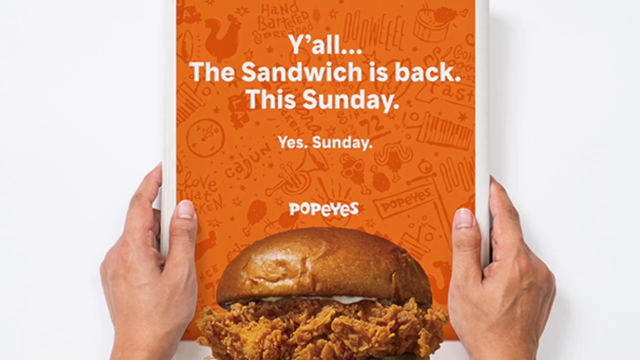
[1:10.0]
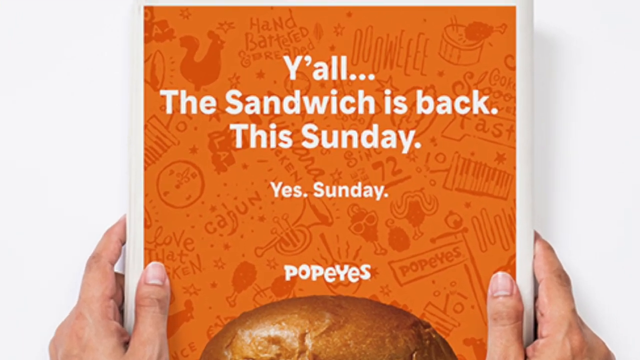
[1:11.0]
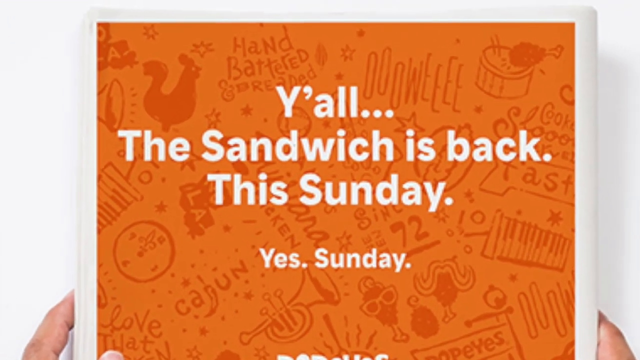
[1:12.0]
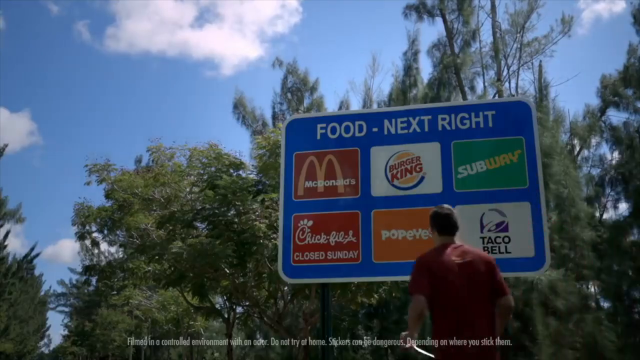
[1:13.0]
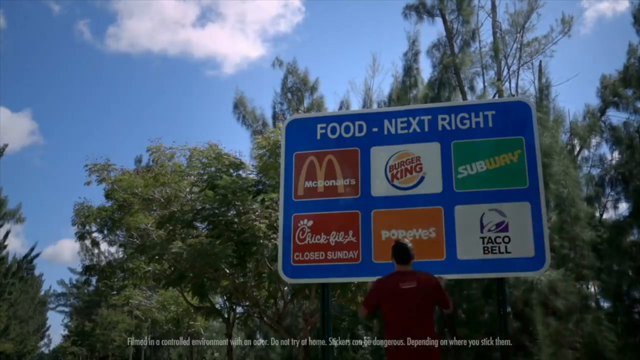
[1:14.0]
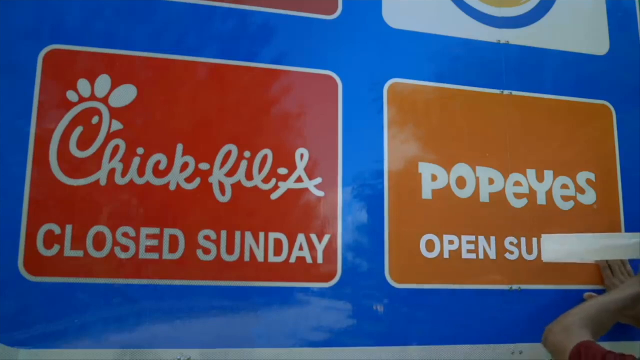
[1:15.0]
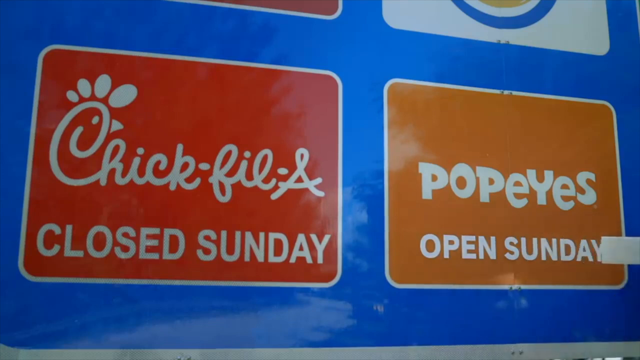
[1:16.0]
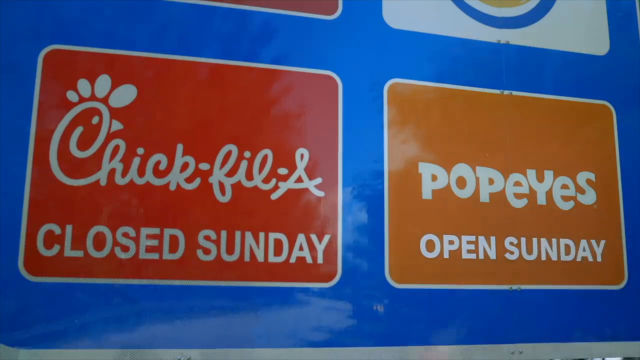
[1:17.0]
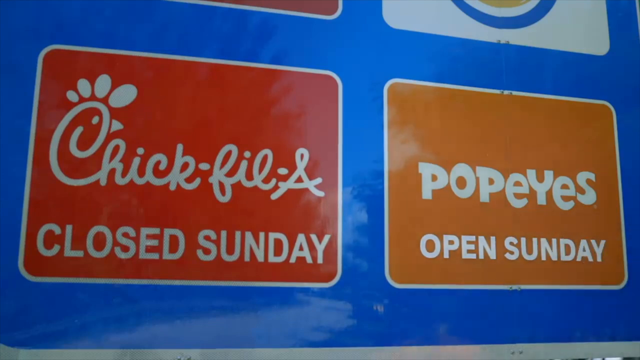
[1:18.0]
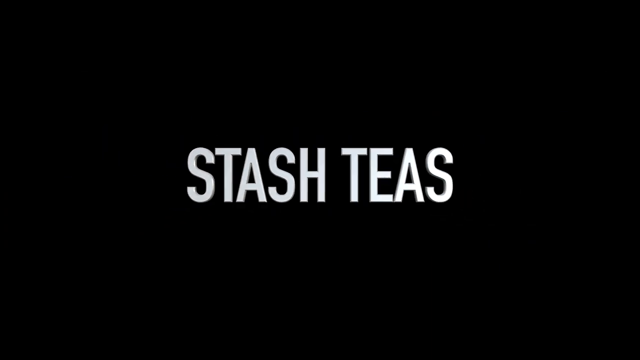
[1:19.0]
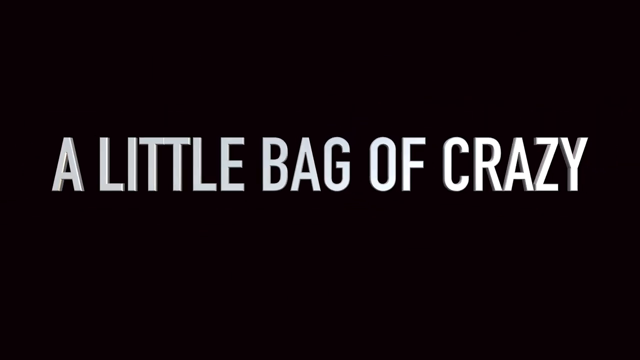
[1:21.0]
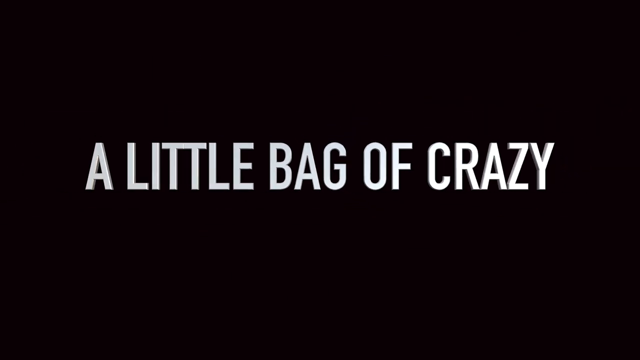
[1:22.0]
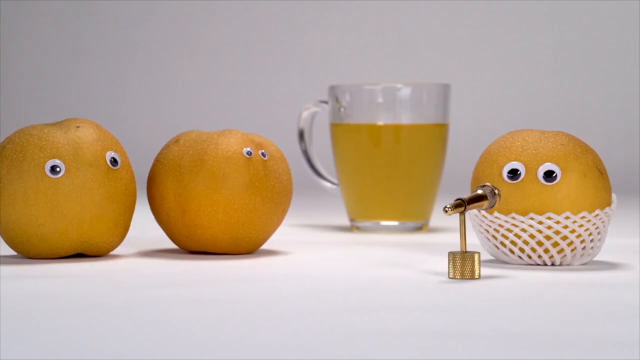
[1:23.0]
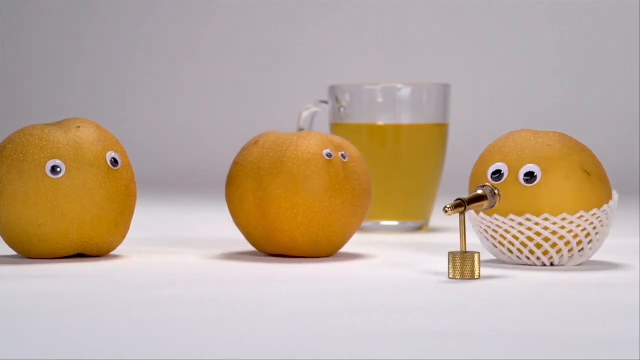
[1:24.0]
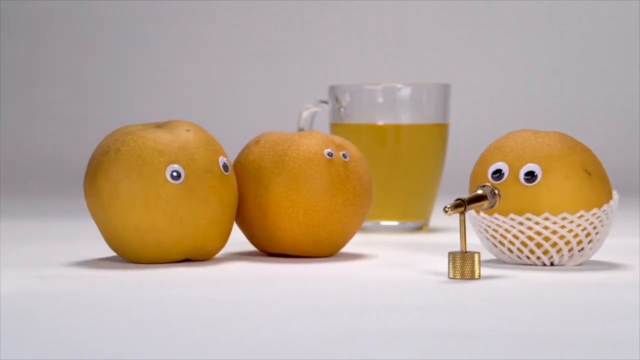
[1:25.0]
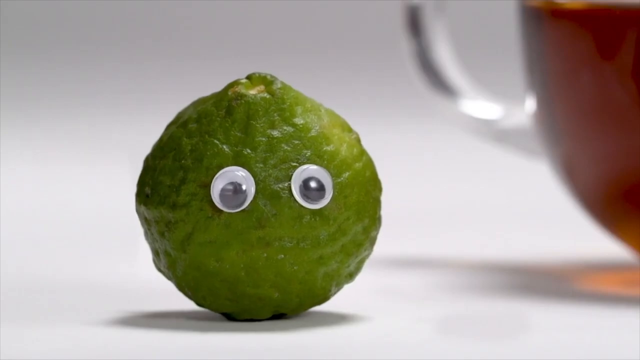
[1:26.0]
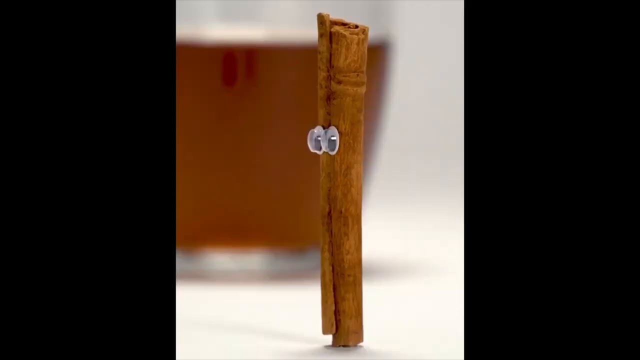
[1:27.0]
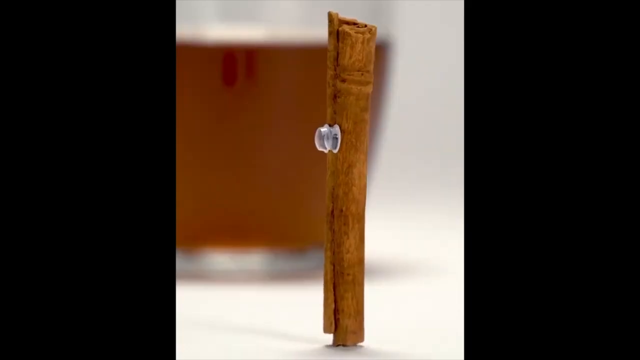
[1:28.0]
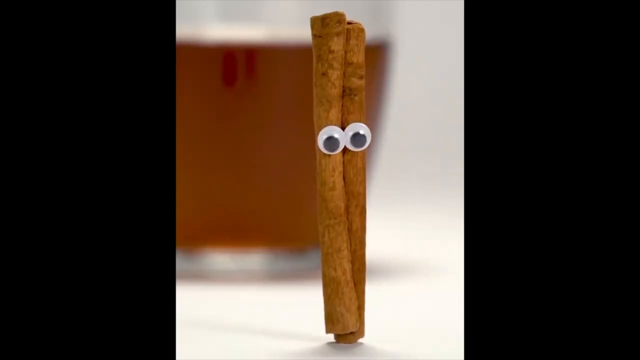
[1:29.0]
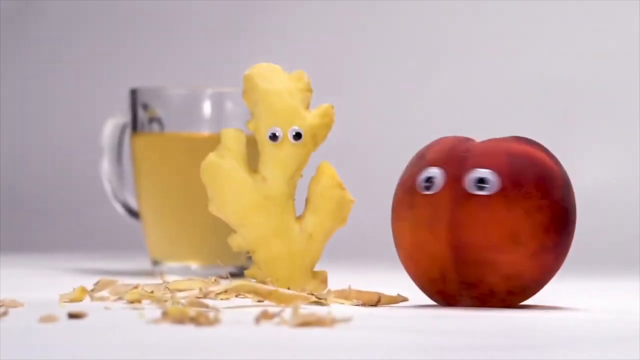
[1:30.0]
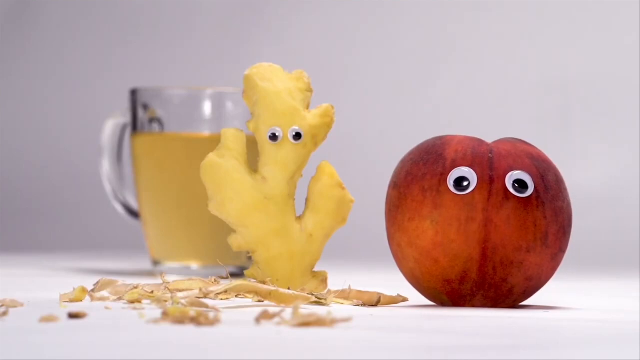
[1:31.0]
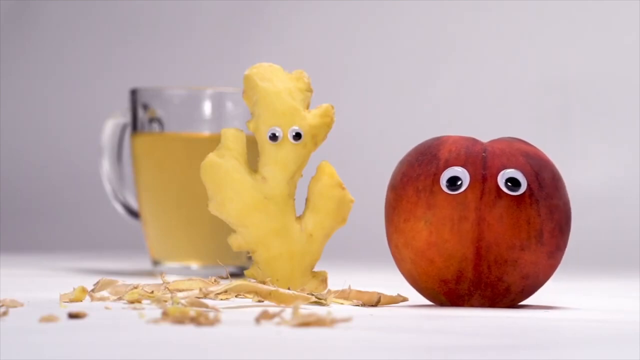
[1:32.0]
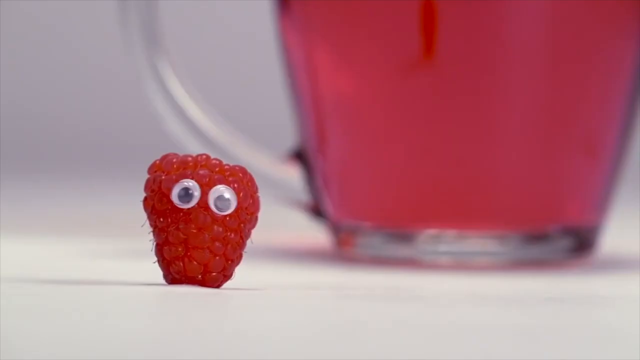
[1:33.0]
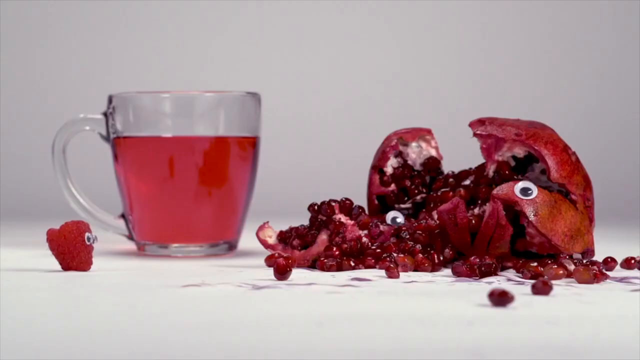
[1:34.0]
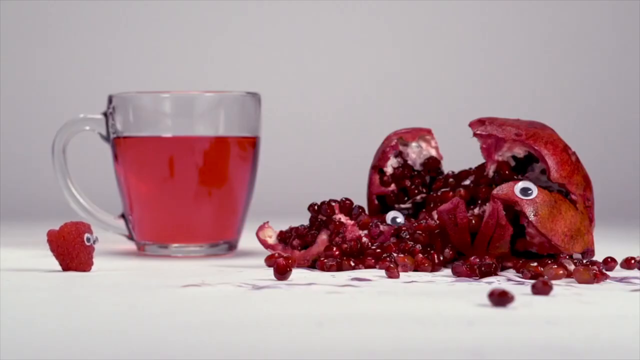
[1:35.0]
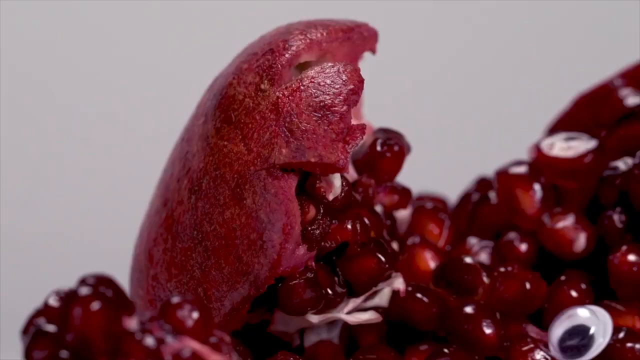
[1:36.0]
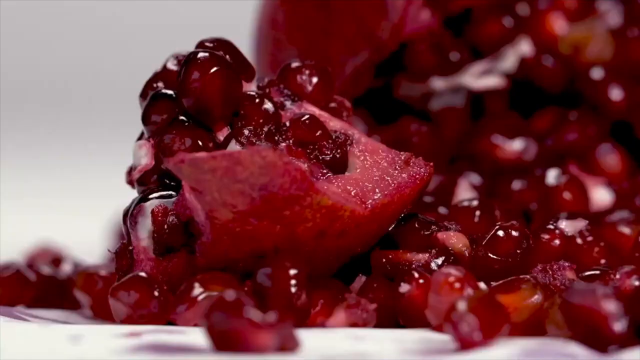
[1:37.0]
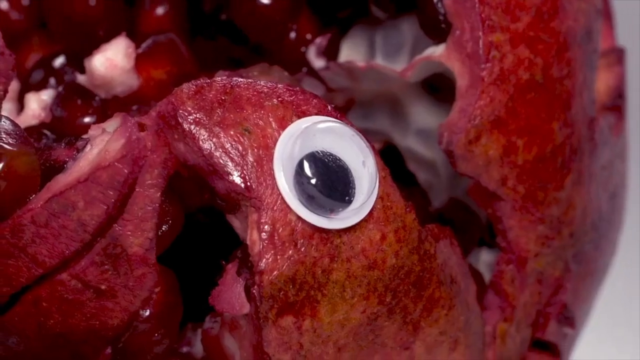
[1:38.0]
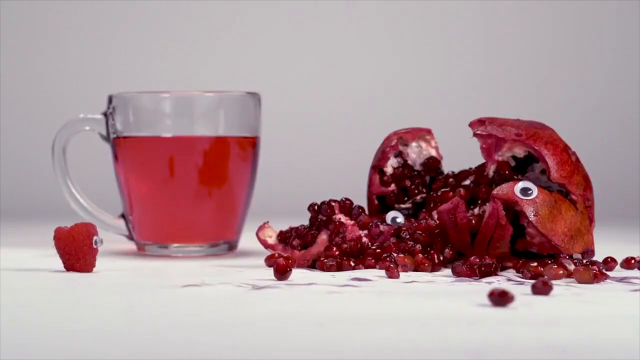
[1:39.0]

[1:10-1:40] An orange sheet from Popeyes reads "Y'all, the sandwich is back this Sunday. Yes, Sunday." Next, a large sign outside reads "food next right", with a Popeye sign in the middle of the bottom row; someone peels a sticker back to show that it is open on Sunday. A black screen follows with white text that gets smaller, then changes to other white text that also shrinks. Then fruit appears on a table with little eyes stuck to them, as though they are real people, moving across the table. There are many different fruits of different colors, such as raspberries, lemons and peaches, all with little eyes attached. One of them looks like it has been crushed with a hammer: it is completely smashed, with the fruit bulging out the sides and the little eyes scattered across the table.